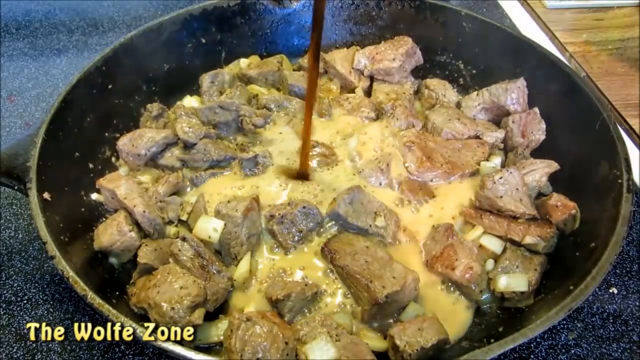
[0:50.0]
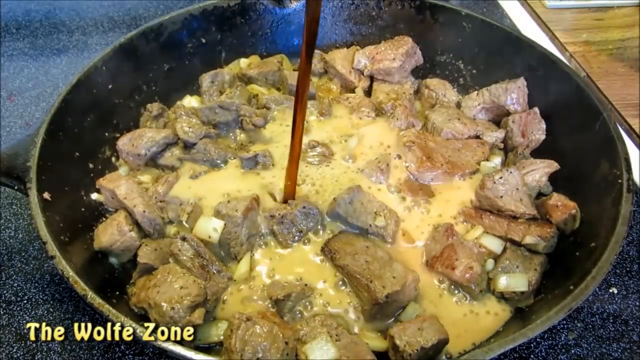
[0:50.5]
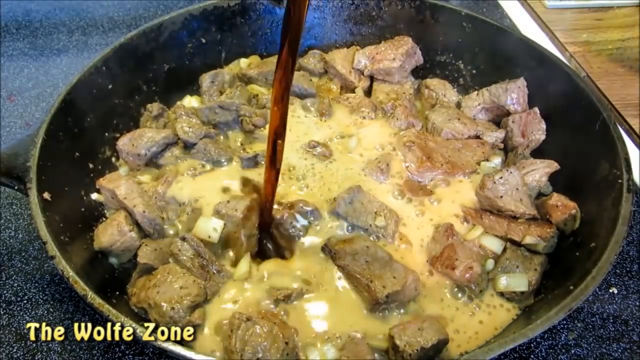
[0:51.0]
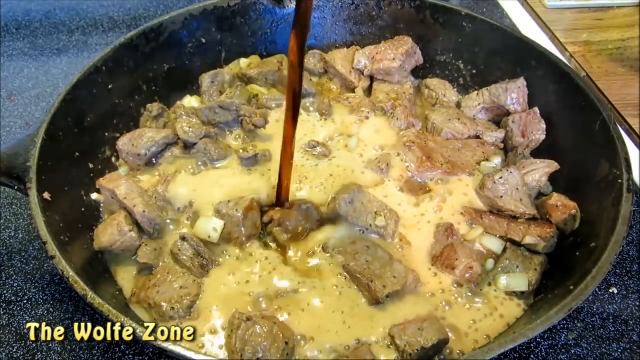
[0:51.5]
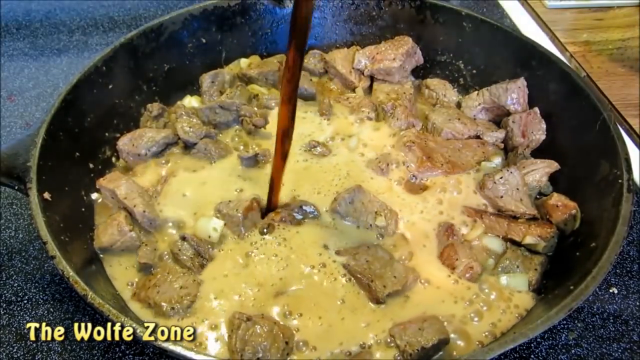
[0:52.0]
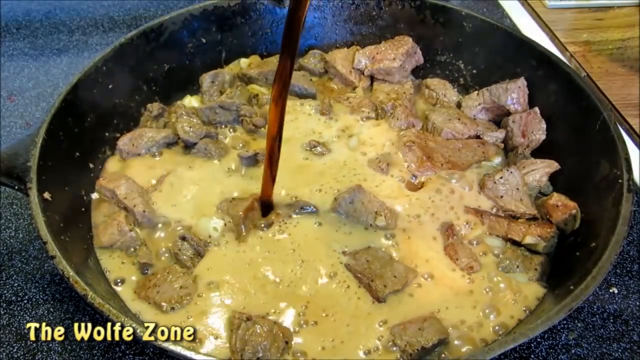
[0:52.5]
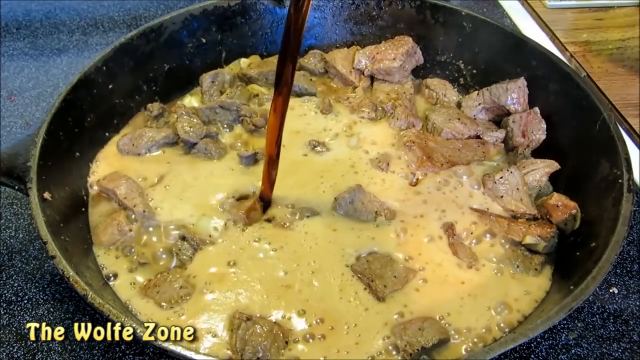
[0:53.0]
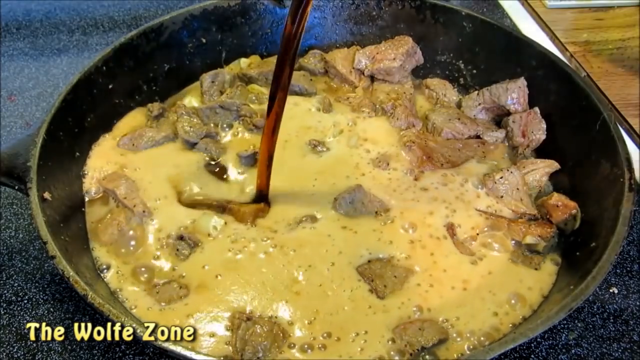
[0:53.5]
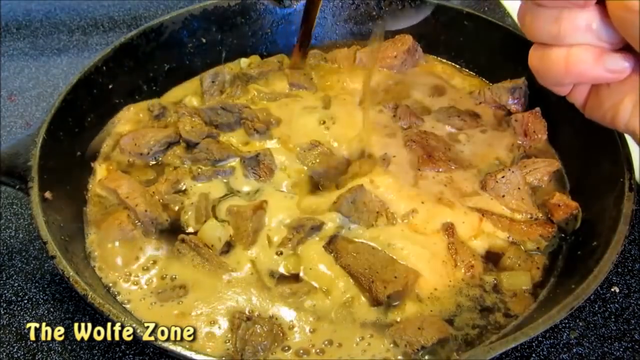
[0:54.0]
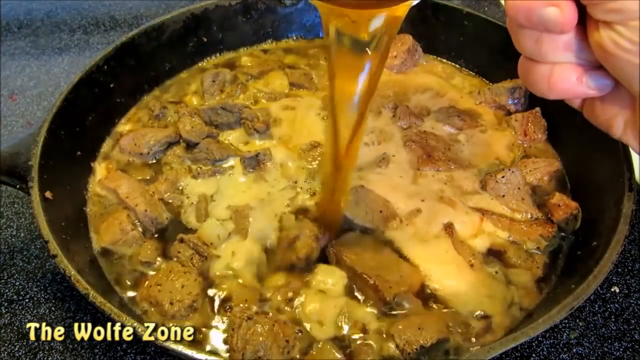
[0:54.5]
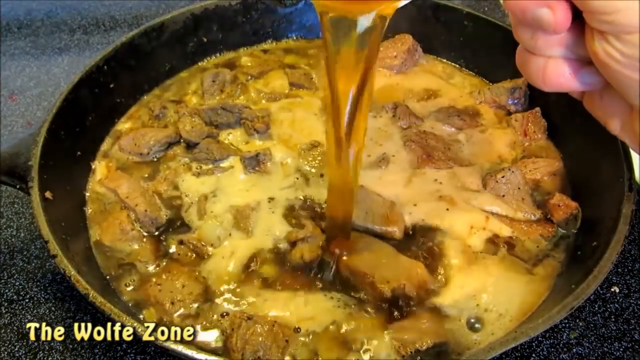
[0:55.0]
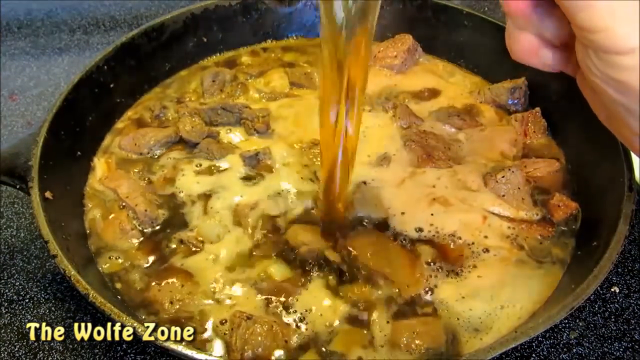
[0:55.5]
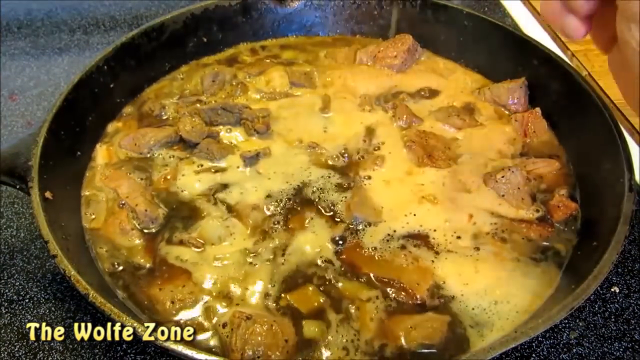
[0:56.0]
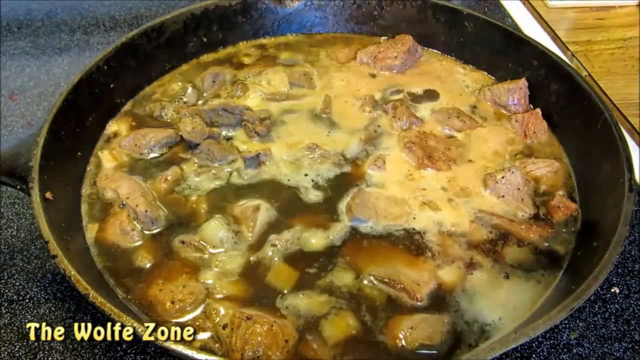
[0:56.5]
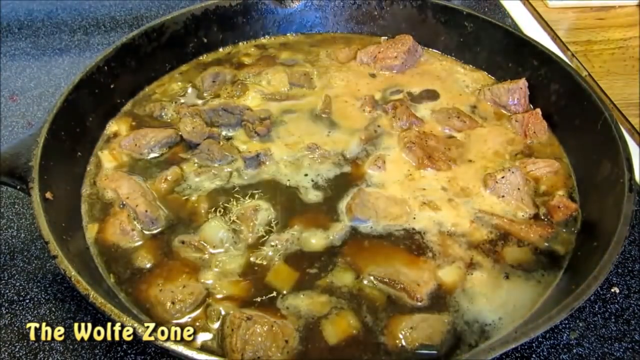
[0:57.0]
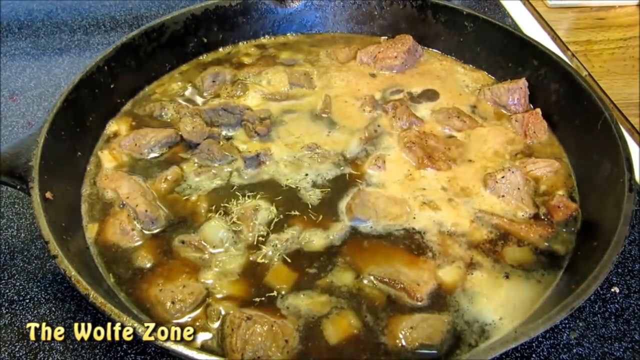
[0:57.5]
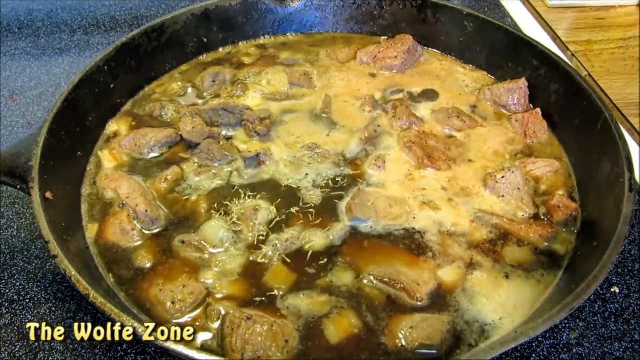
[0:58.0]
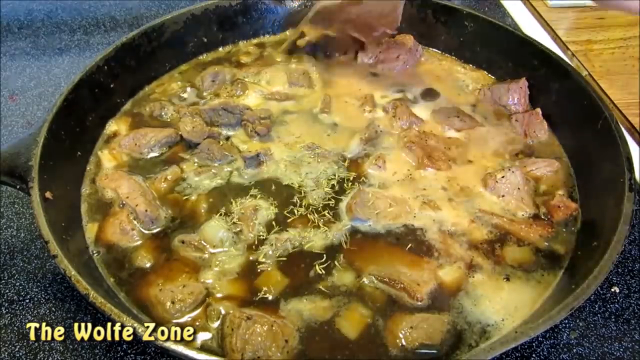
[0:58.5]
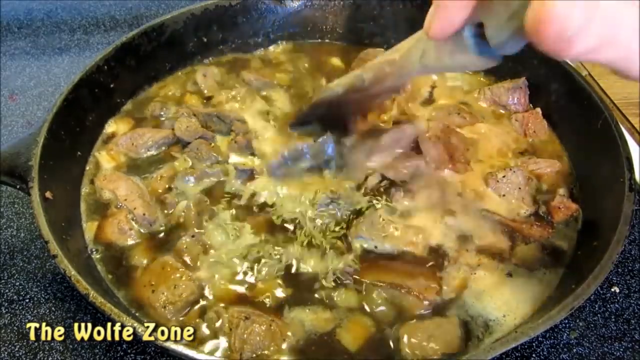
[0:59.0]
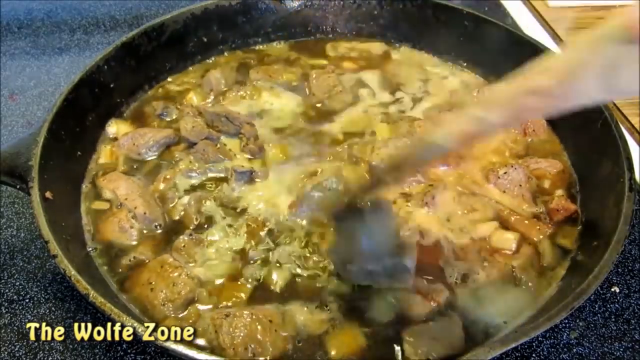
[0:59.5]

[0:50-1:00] The man appears to be pouring Coca-Cola over the meat, and there seems to be some stock, maybe beef stock. He adds something else, either a spice or something unclear and very odd looking. The meat and onions are caramelizing together with the Coca-Cola.